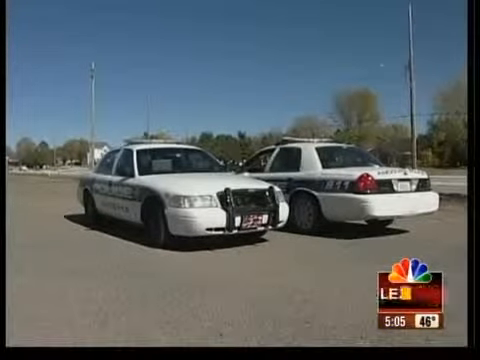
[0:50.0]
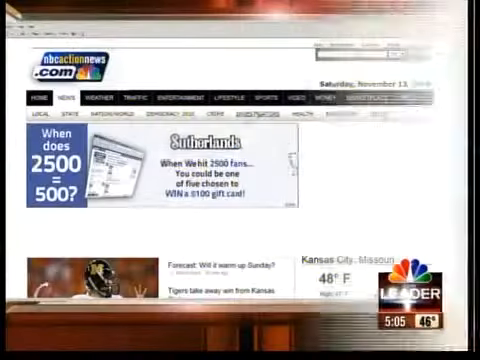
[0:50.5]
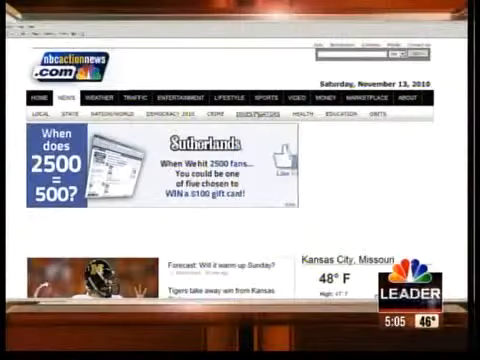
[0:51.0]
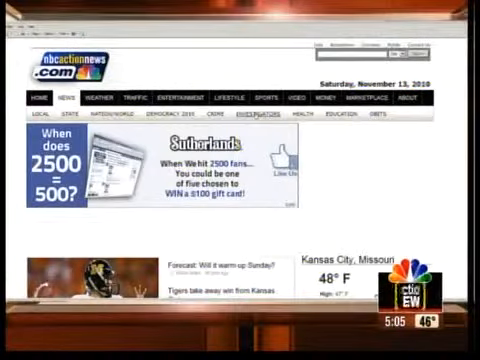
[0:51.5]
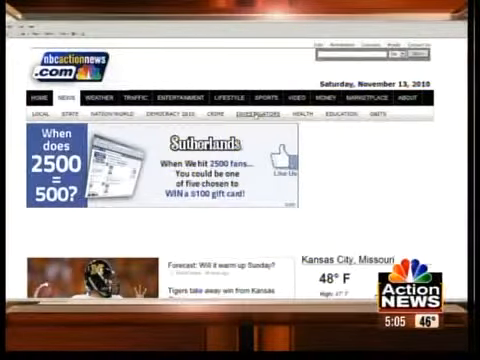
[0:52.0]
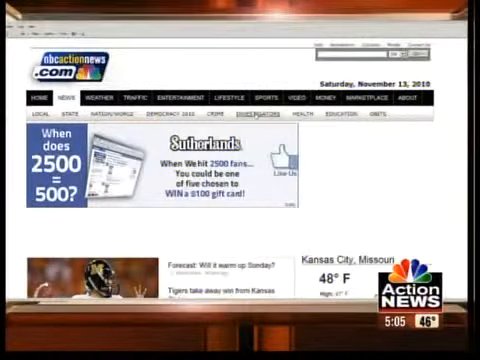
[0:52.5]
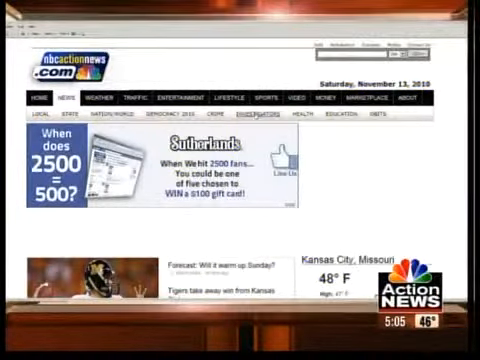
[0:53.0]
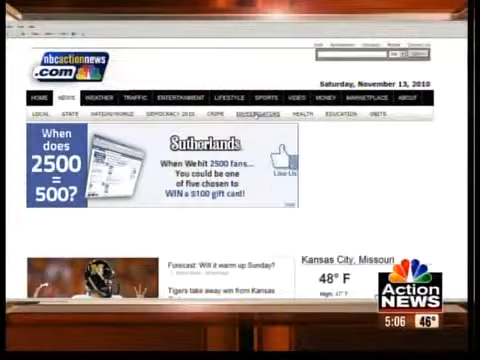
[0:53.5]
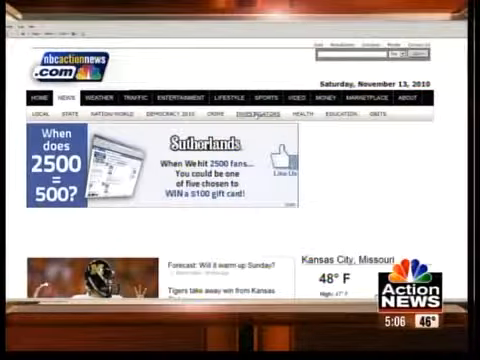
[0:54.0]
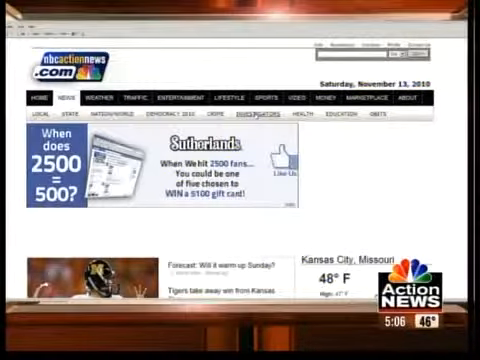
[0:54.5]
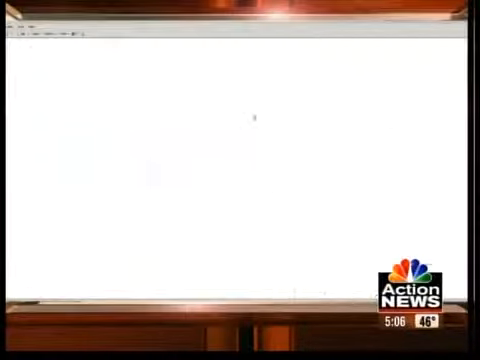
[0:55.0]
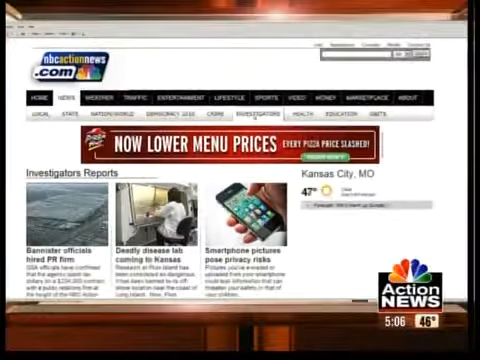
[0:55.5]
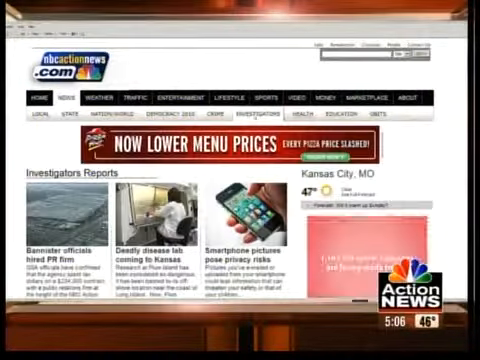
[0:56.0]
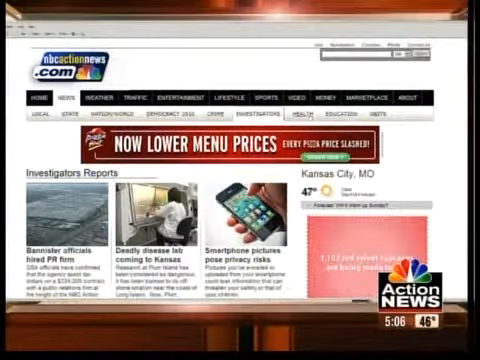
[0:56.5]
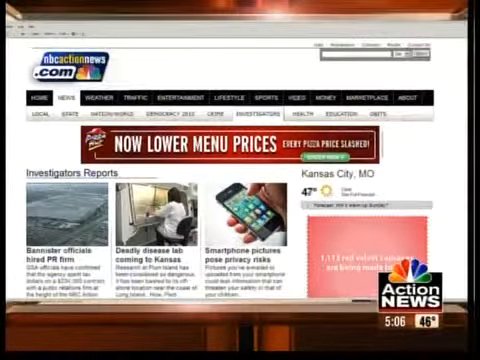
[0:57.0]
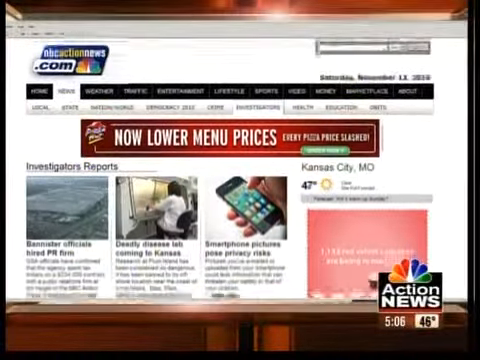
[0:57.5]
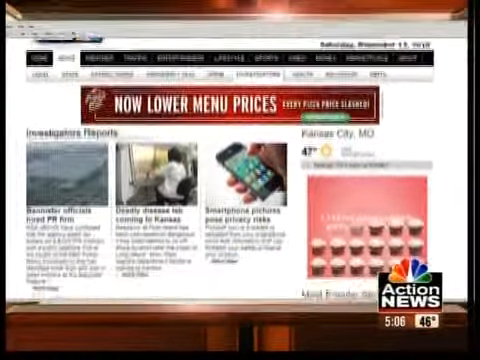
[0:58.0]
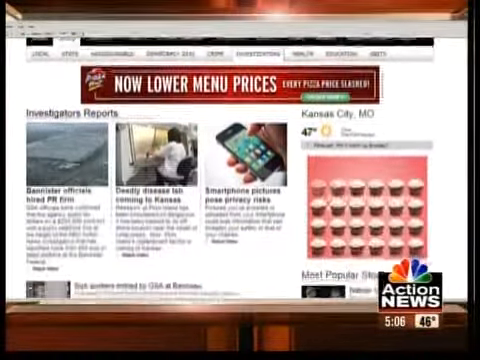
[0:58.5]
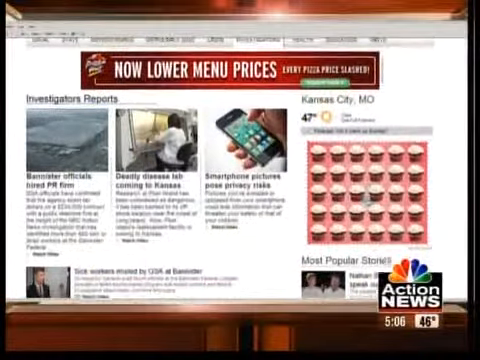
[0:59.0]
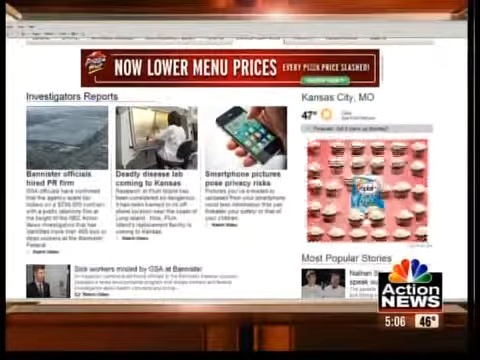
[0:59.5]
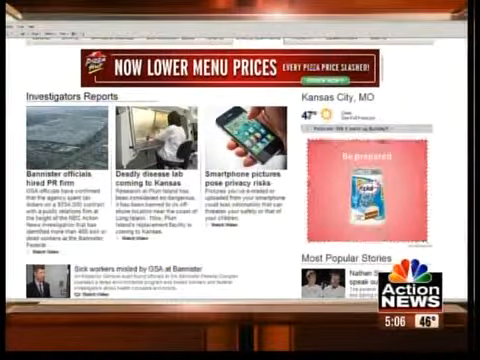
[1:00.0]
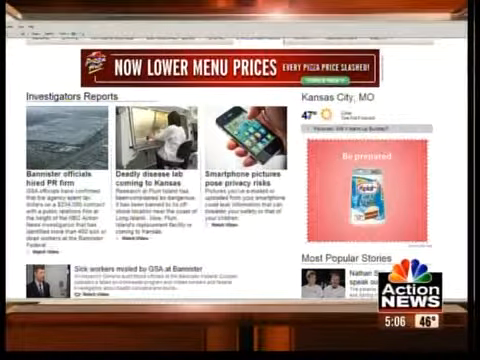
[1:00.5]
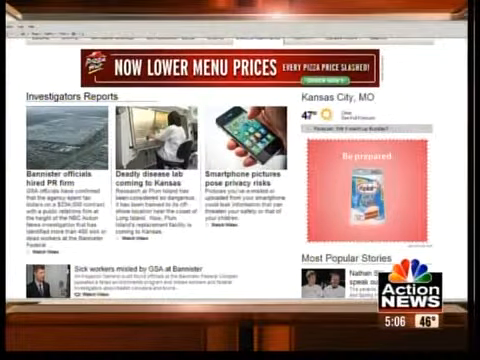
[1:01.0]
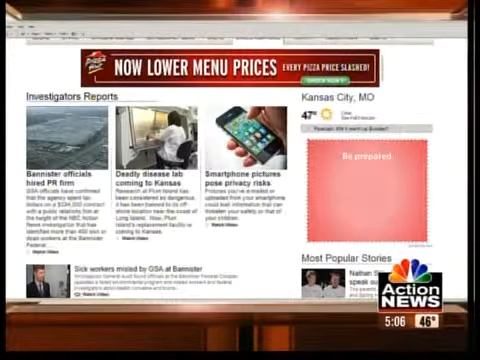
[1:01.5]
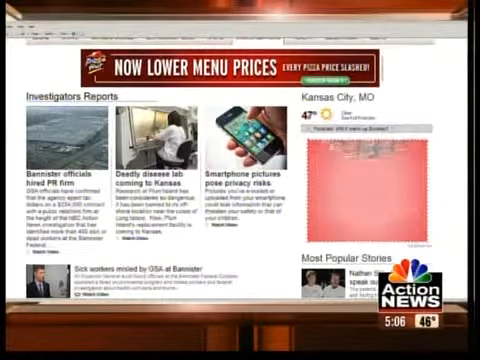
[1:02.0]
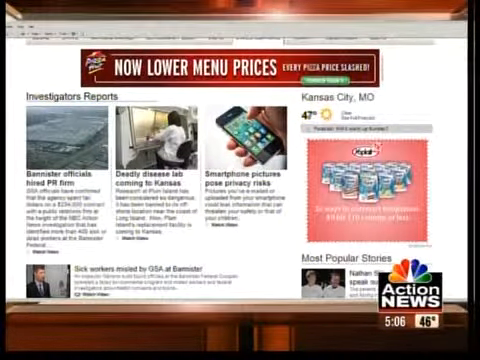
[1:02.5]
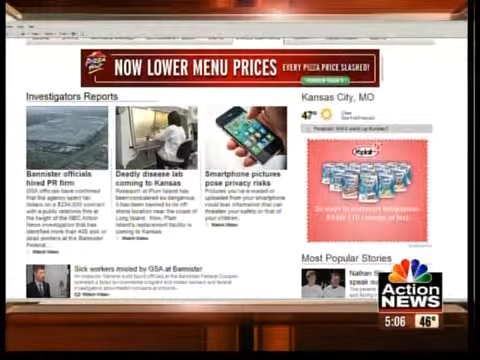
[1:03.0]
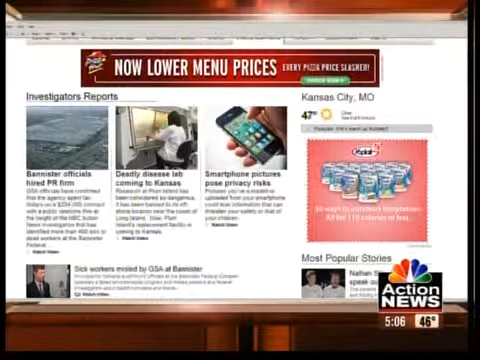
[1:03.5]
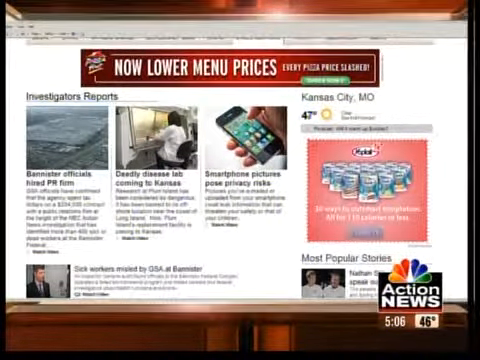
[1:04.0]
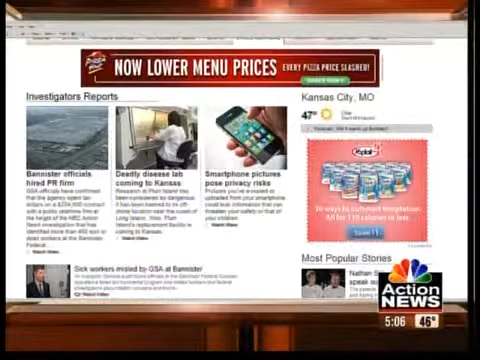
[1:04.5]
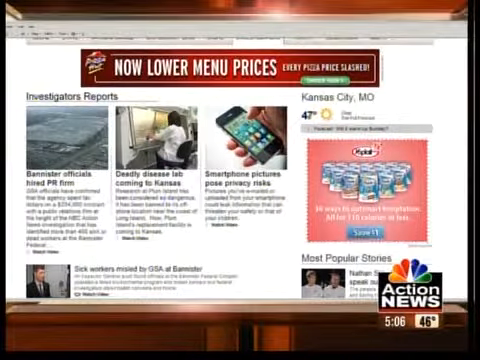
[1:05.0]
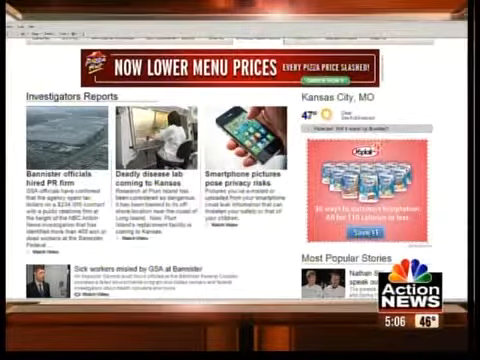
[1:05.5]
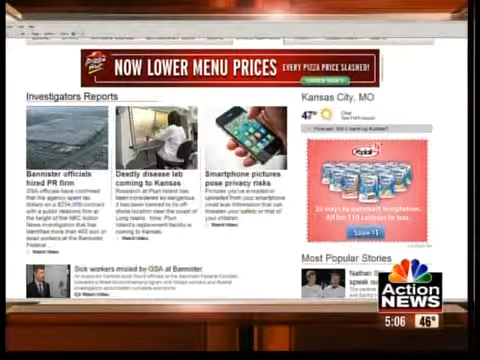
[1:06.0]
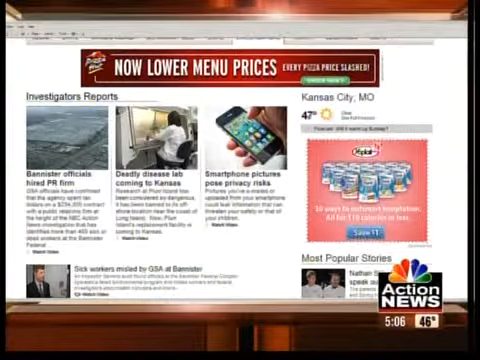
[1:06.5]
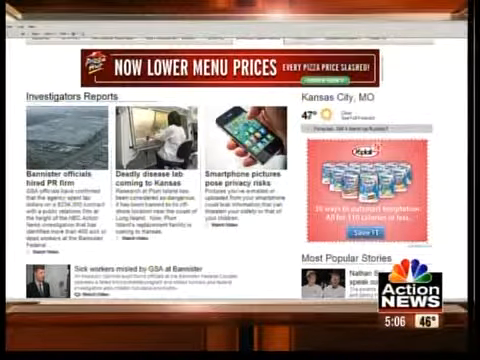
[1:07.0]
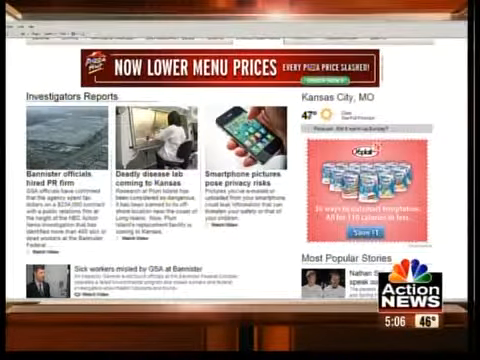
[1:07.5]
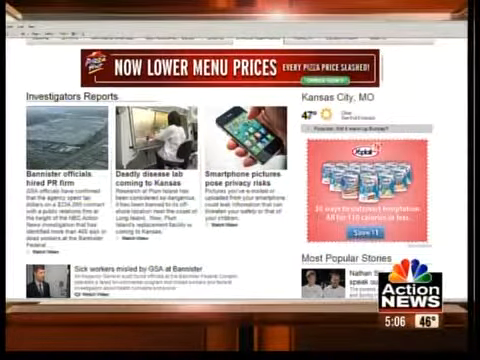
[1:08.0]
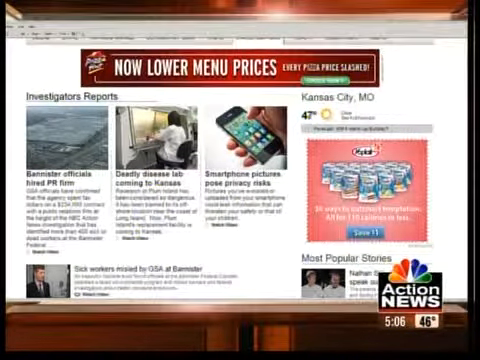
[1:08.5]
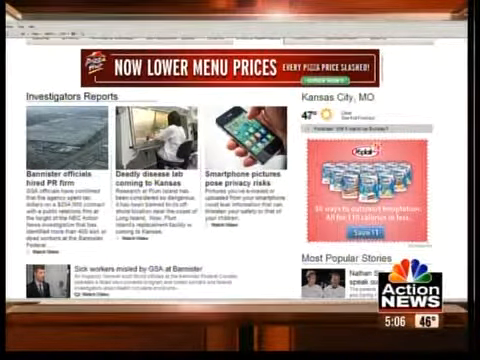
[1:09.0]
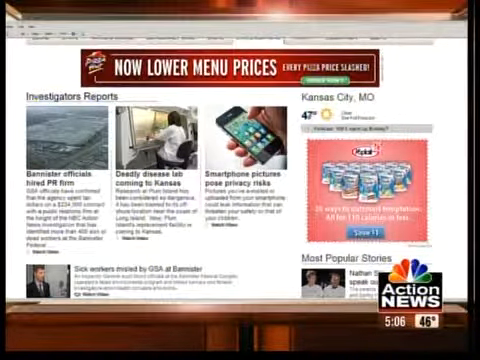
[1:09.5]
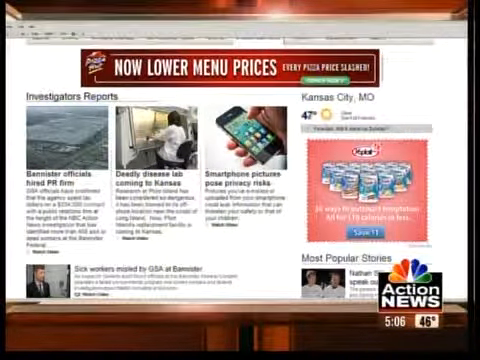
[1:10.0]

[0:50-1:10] Two police cars are going in opposite directions. At the bottom of the screen is the logo of an American television network. The video then cuts to what appears to be an advertisement, followed by another advertisement, maybe for the website NBCActionNews.com. The webpage shows multiple items, including multiple advertisements, with a red and white Pizza Hut advertisement showing menu prices in the middle. The Pizza Hut icon is in the top left corner, underneath the Pizza Hut logo or advertisement. The words "Kansas City, Missouri" appear with the weather for the area, 47 degrees. To the left are investigative reports with three images: one shows a person holding an Apple phone, another shows a person in a white coat sitting at a desk, and the third seems to be an aerial shot of possibly a business, without much detail visible.